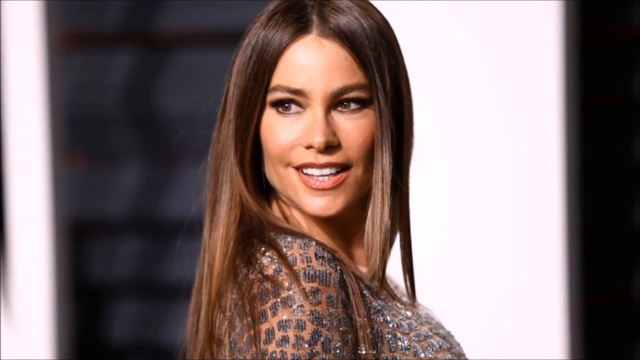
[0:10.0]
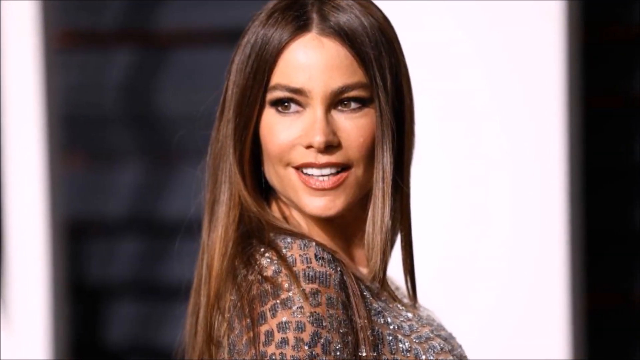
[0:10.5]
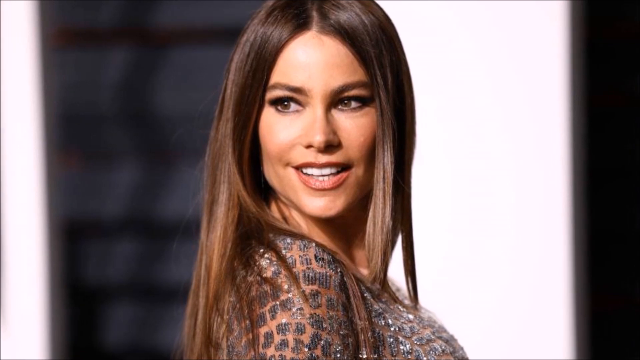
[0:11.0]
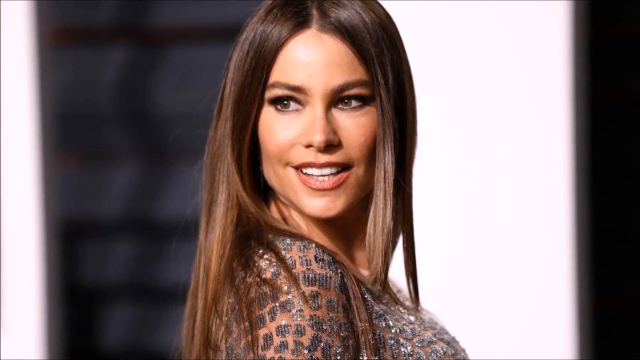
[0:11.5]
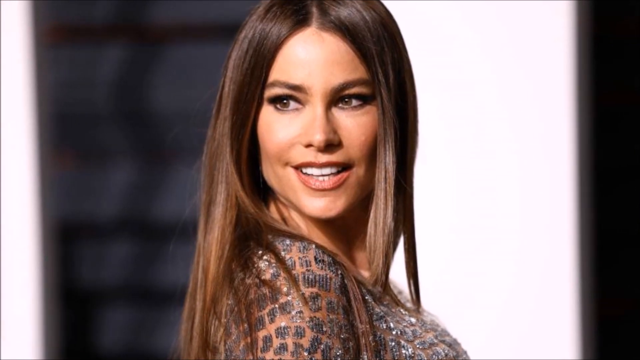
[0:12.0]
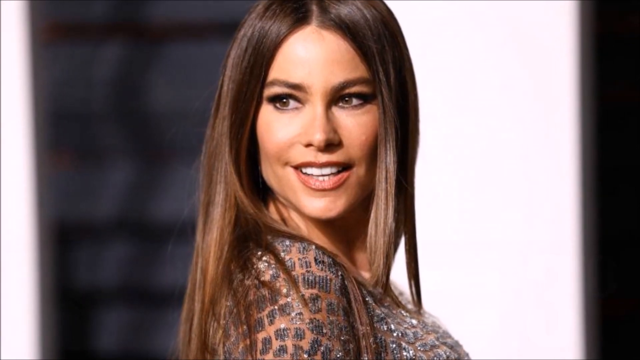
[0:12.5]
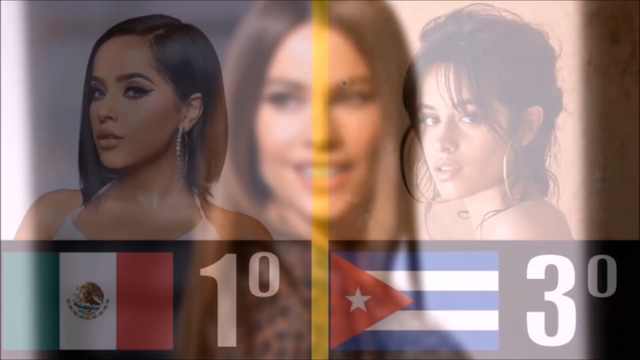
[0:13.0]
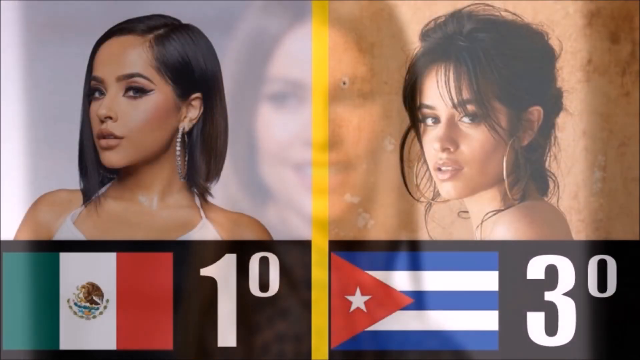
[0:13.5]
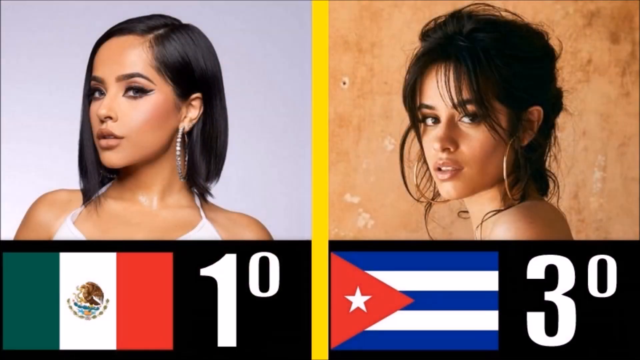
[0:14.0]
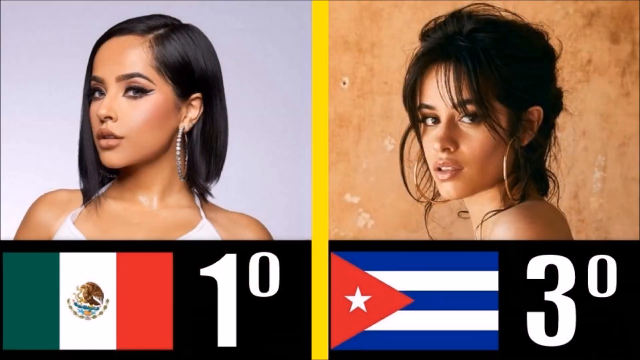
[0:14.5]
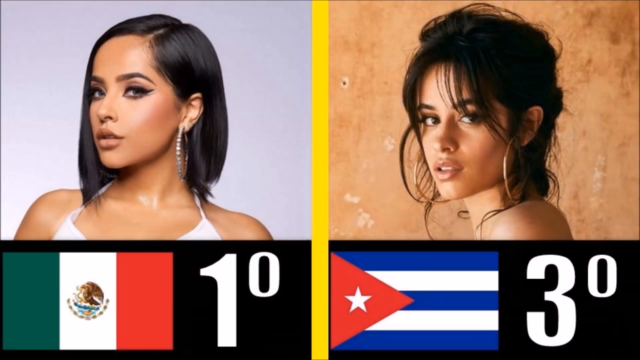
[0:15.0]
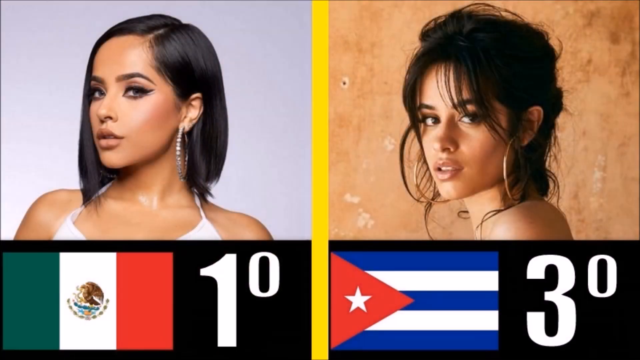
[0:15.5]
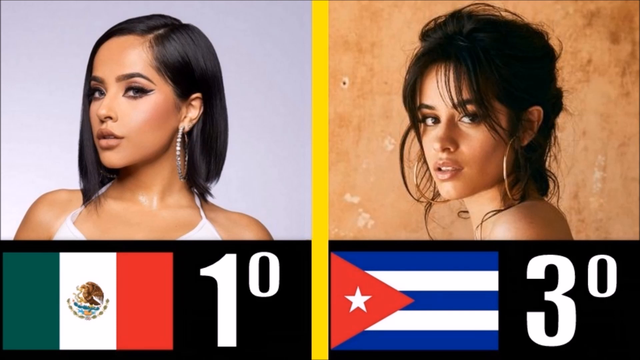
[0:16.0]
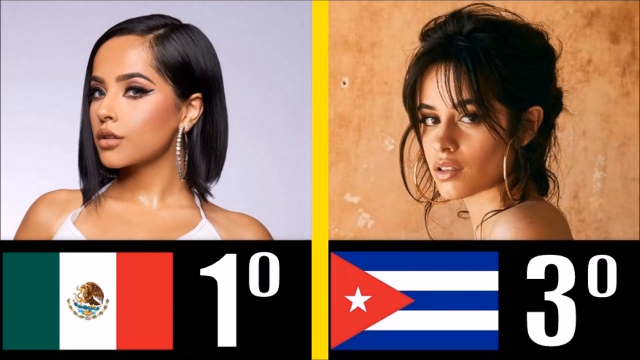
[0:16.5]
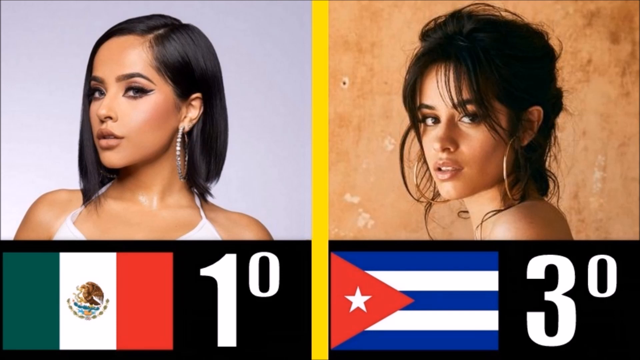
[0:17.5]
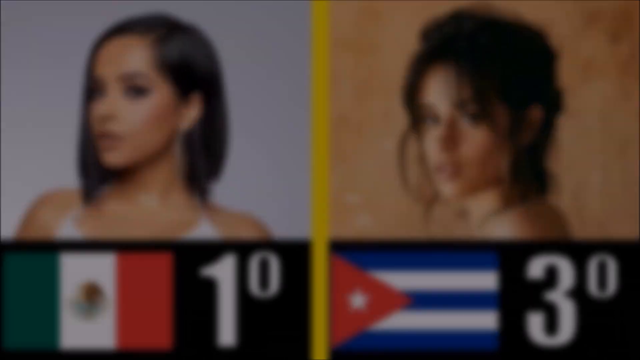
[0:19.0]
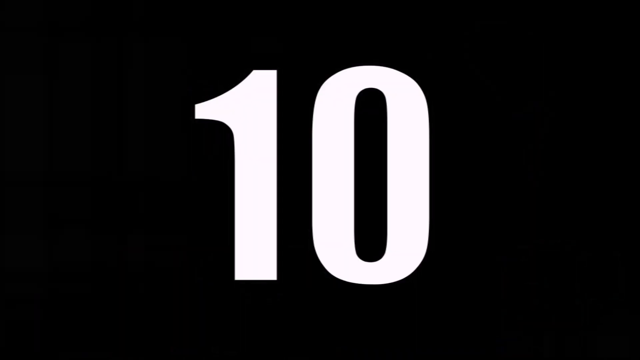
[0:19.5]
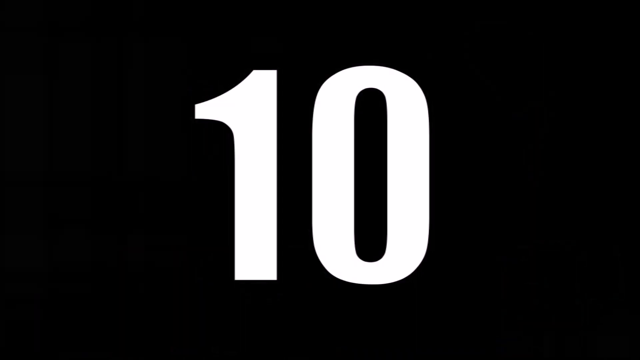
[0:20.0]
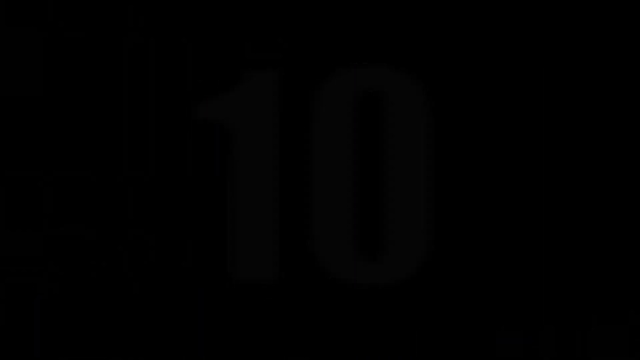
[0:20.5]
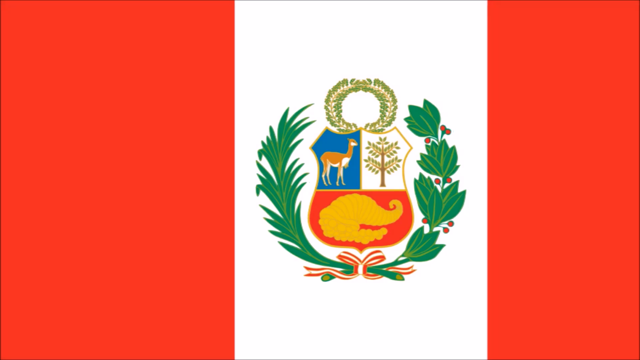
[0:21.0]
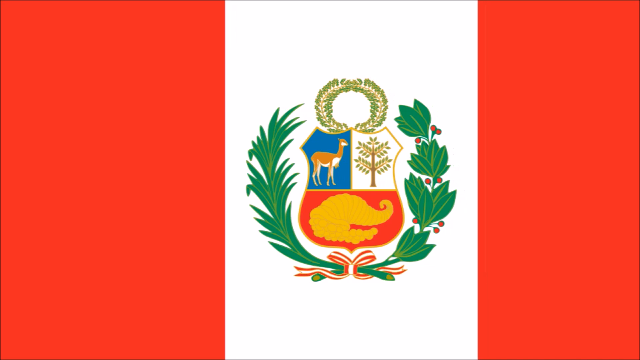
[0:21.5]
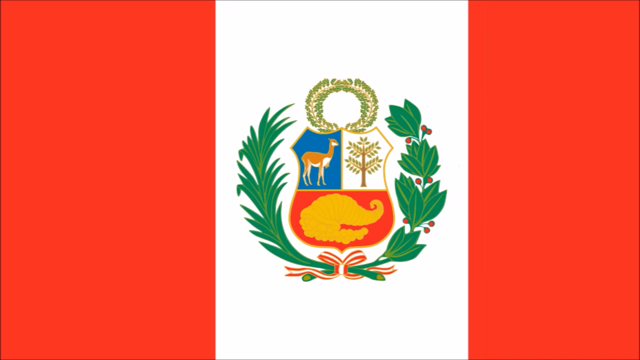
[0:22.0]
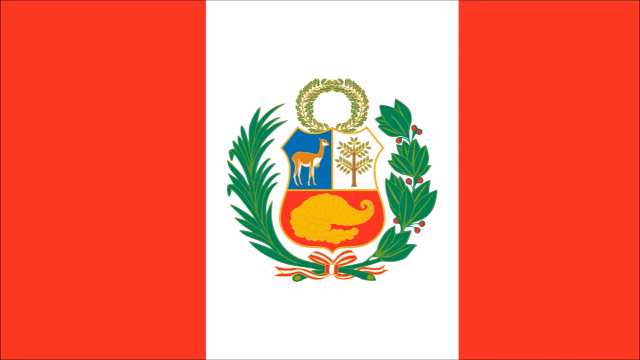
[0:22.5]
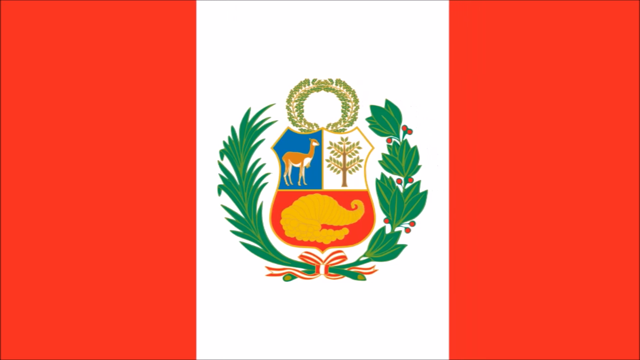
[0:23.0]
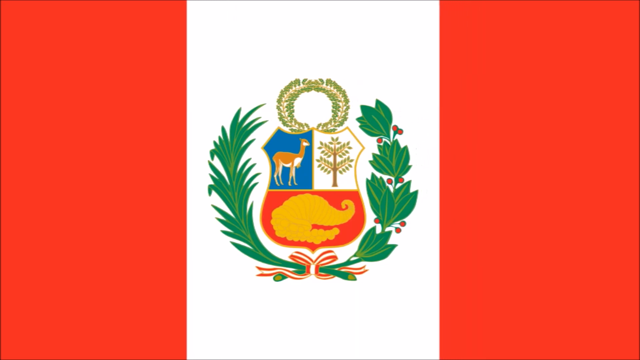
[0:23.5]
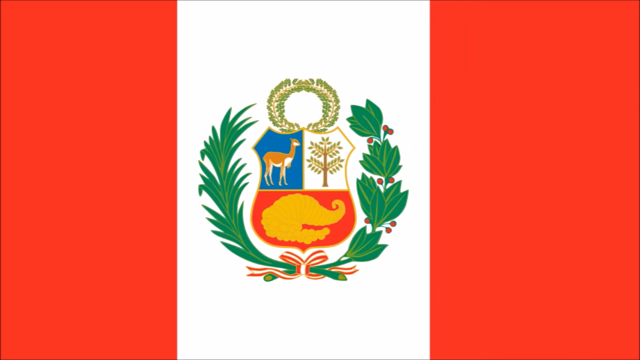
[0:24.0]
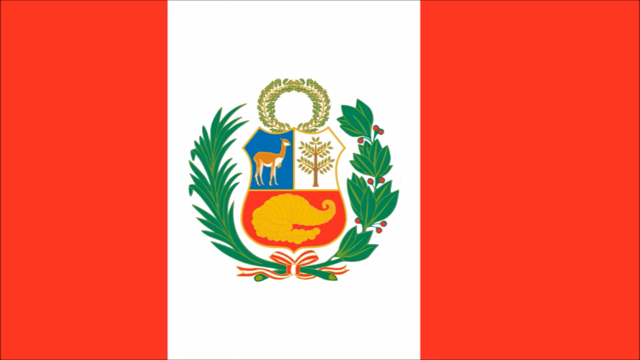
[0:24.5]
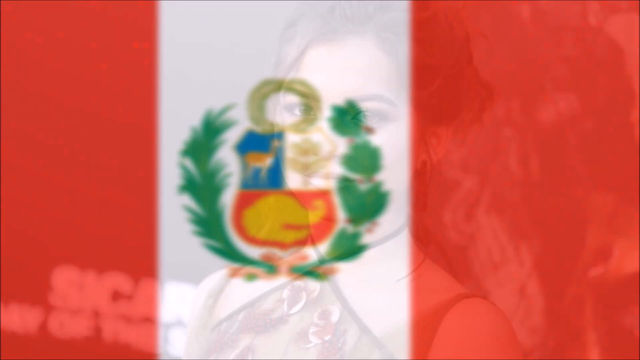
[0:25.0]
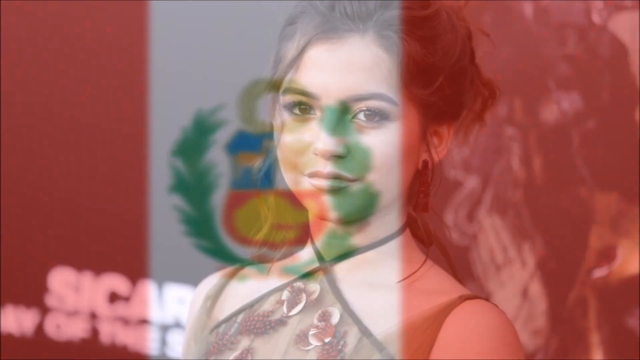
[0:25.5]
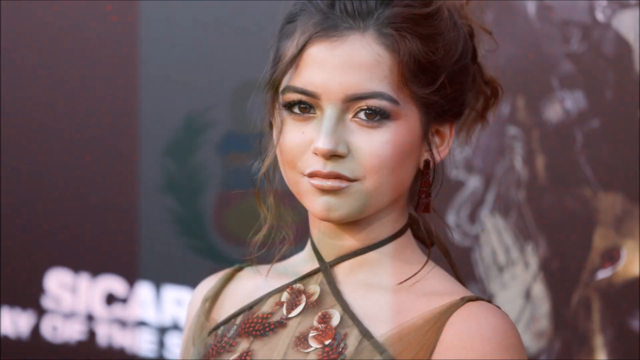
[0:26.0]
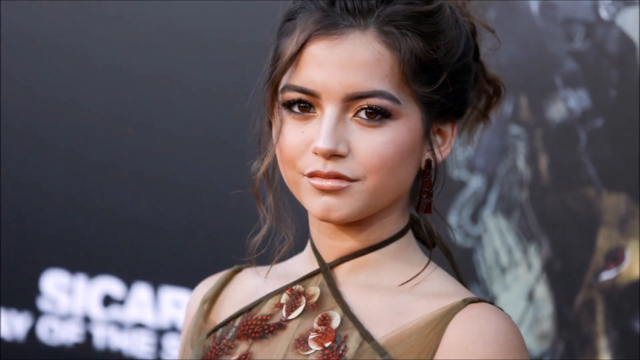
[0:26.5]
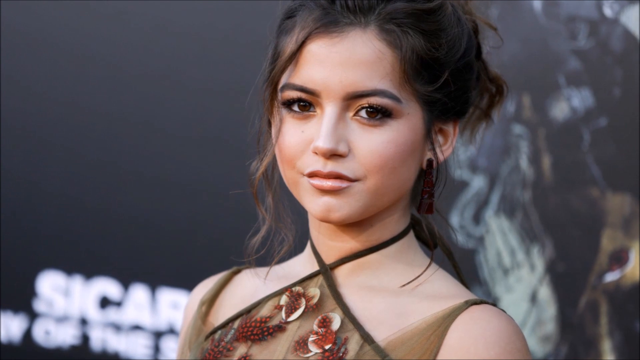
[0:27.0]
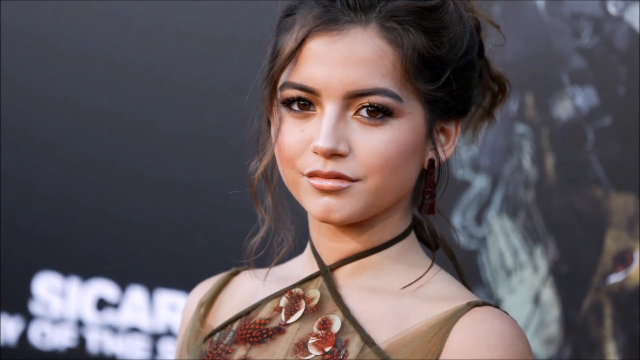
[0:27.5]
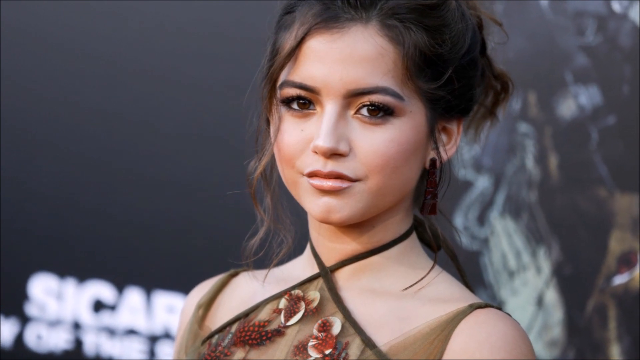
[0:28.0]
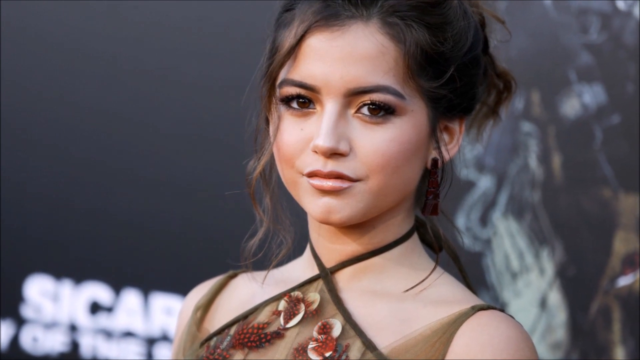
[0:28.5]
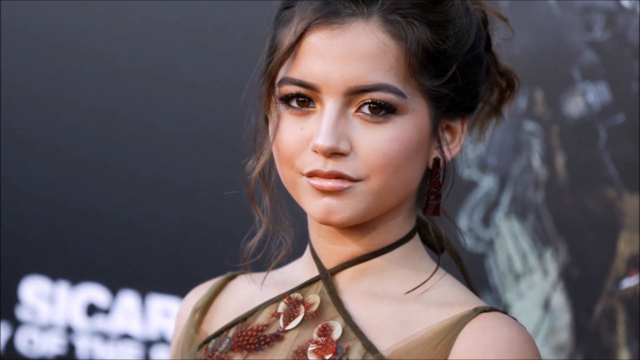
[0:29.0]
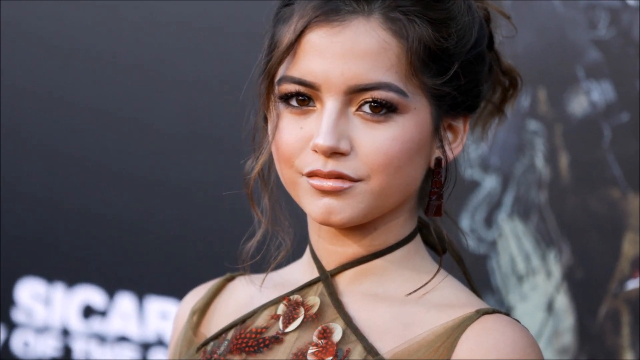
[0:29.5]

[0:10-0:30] The sequence of photographs of women and national flags continues with Sofia Vergara looking over her right shoulder and smiling. She has long, straight brown hair and wears a dress that looks embellished with beadwork. Next comes a graphic with the Mexican flag on the left and a photograph of a woman with short black hair and large silver hoop earrings. Next to the flag is the number one followed by a zero, with the zero looking smaller than the one. On the right side of the screen is the Puerto Rican flag with a three and a smaller zero next to it, and above it another photograph of a woman with dark hair pulled up in a loose bun and very large hoop earrings. The number 10 then appears against a black backdrop, followed by a national flag that is white in the center and red on both sides, with an emblem on the white portion that looks like branches of flowers or plants surrounding a shield bearing different images. One more photograph follows, of a young woman with dark hair also pulled up in a loose bun, looking at the camera and smiling slightly.